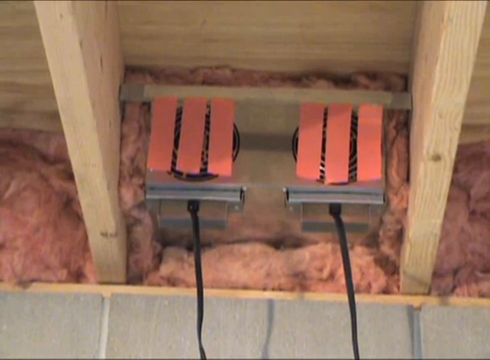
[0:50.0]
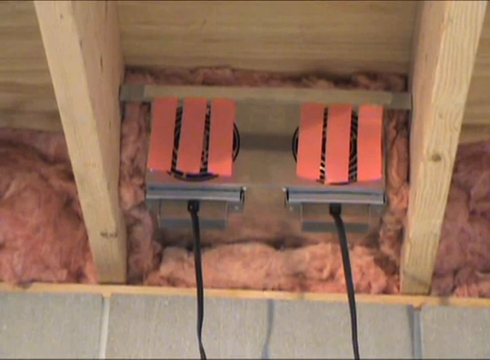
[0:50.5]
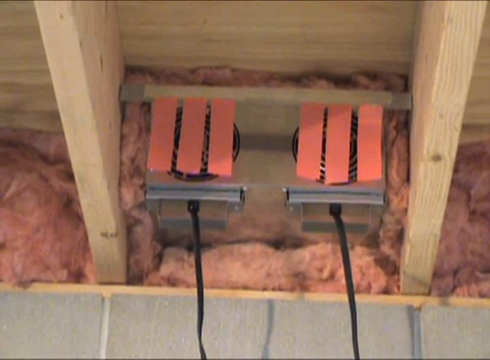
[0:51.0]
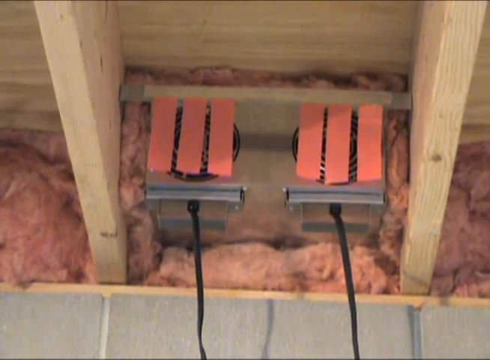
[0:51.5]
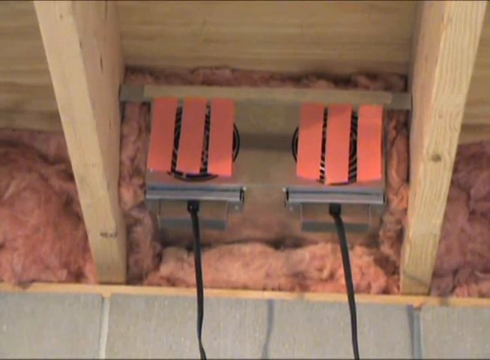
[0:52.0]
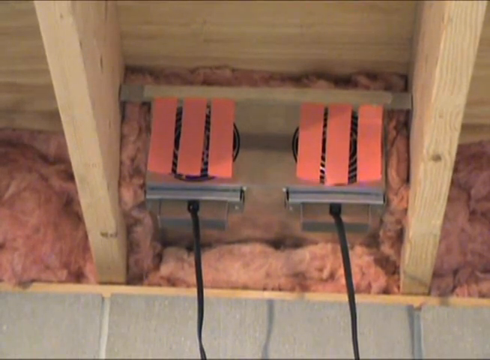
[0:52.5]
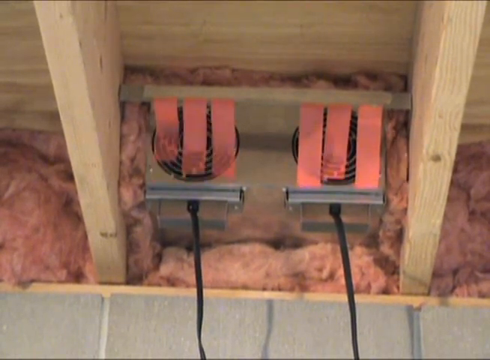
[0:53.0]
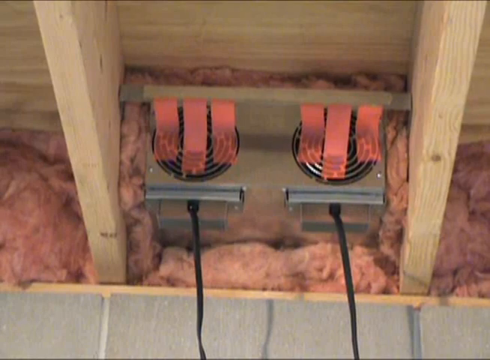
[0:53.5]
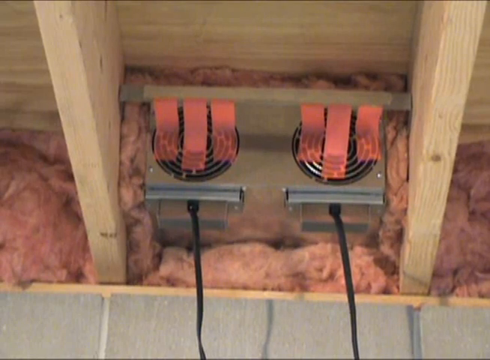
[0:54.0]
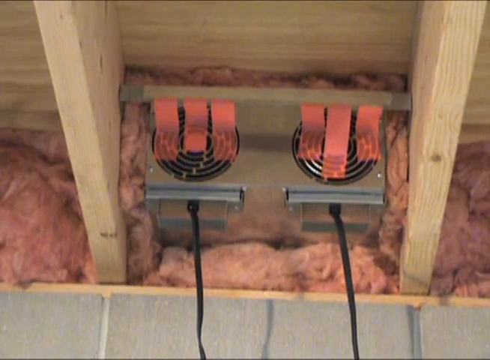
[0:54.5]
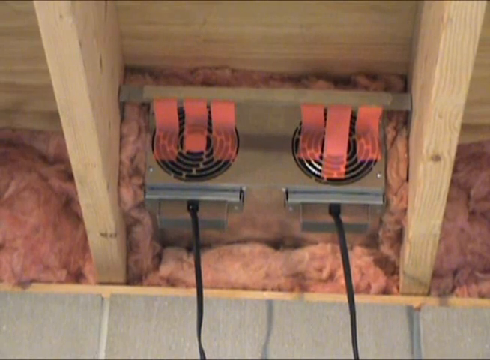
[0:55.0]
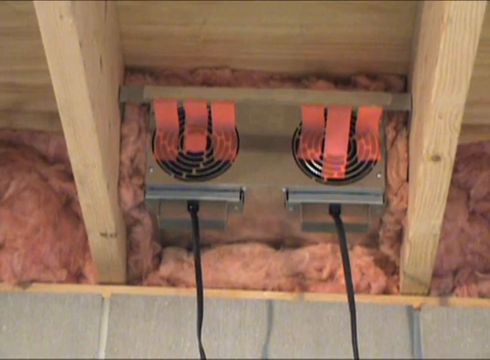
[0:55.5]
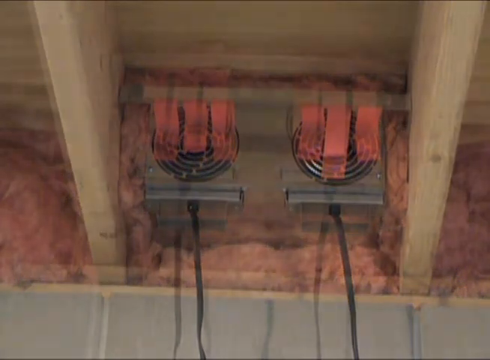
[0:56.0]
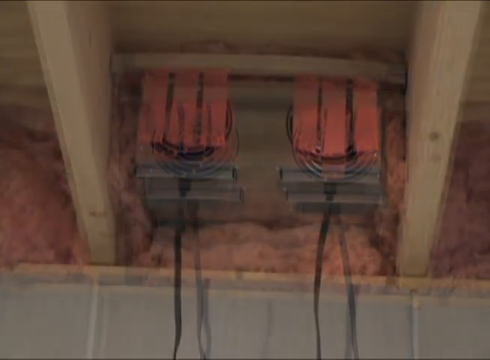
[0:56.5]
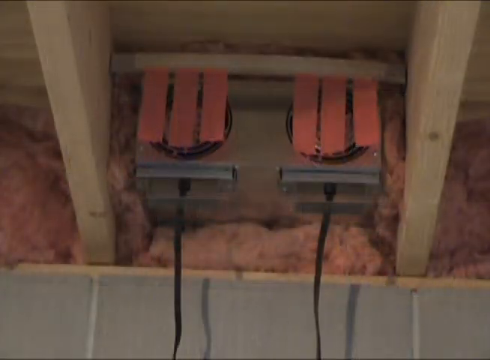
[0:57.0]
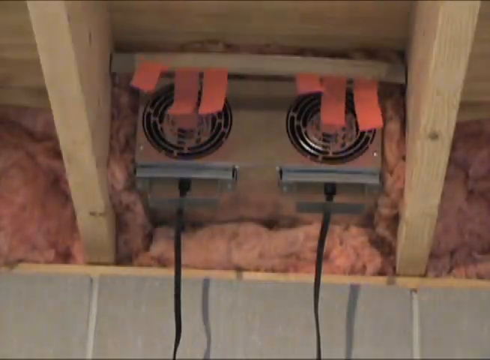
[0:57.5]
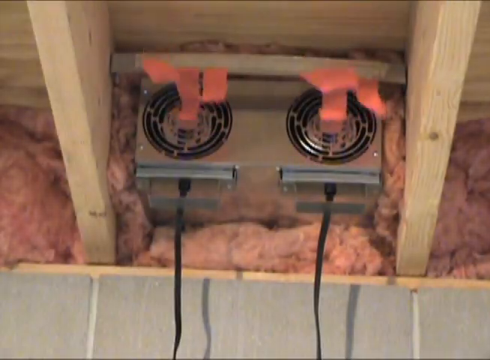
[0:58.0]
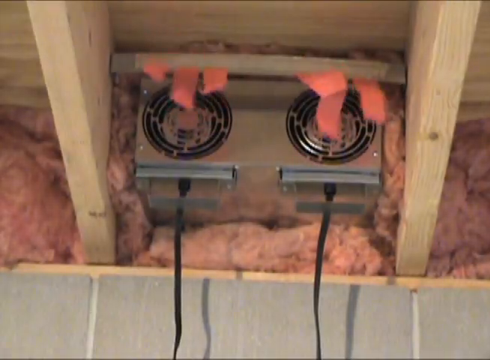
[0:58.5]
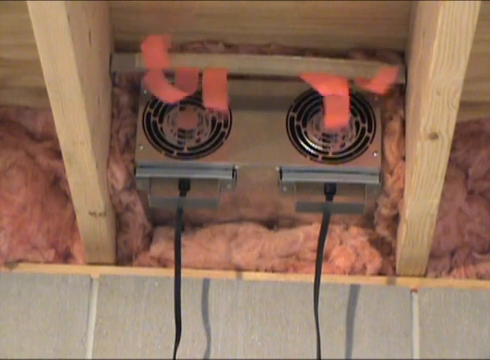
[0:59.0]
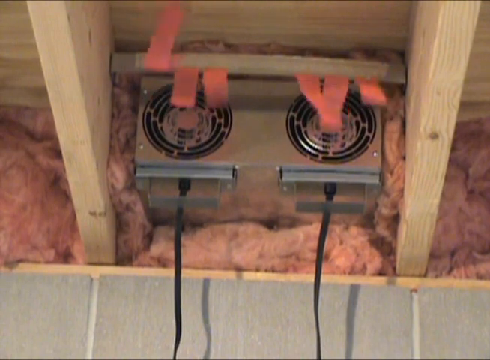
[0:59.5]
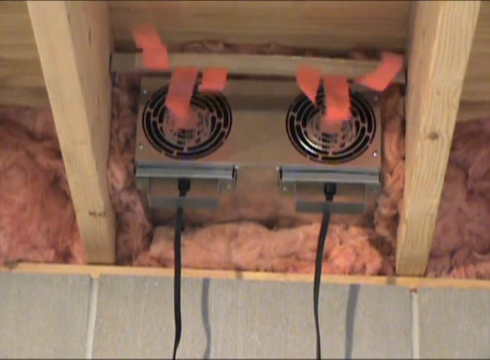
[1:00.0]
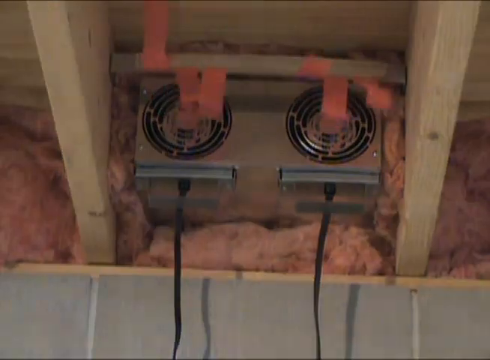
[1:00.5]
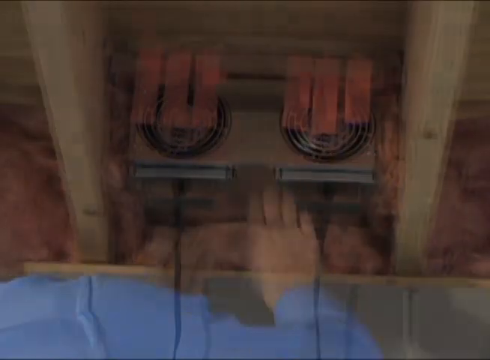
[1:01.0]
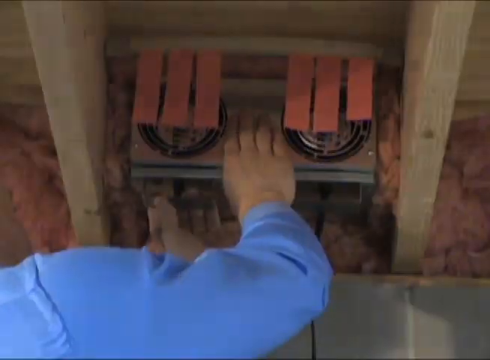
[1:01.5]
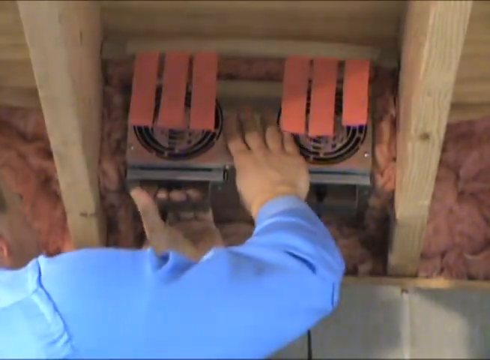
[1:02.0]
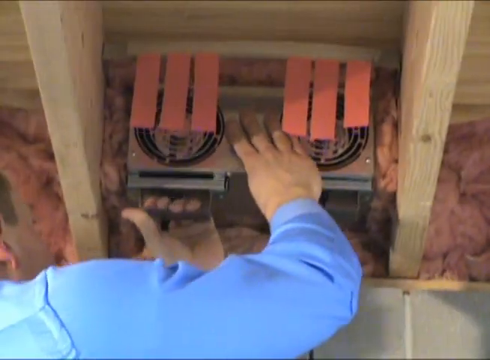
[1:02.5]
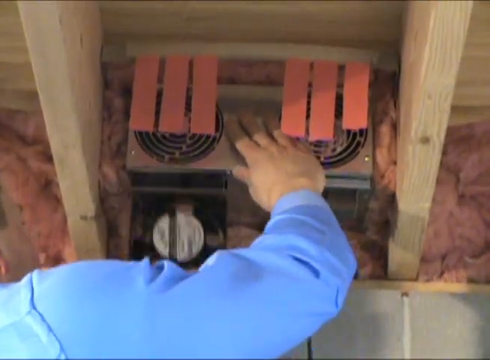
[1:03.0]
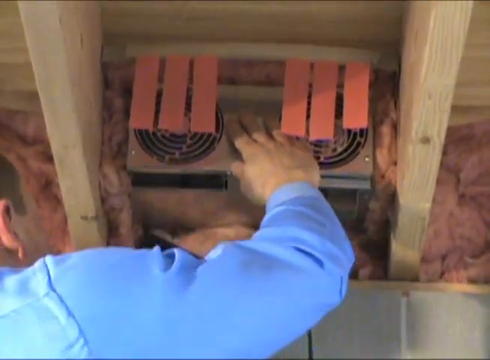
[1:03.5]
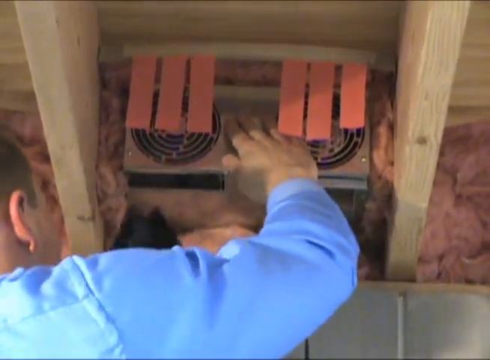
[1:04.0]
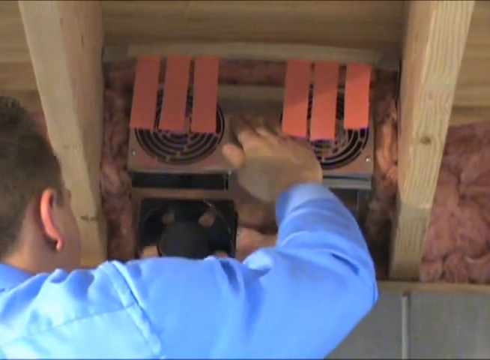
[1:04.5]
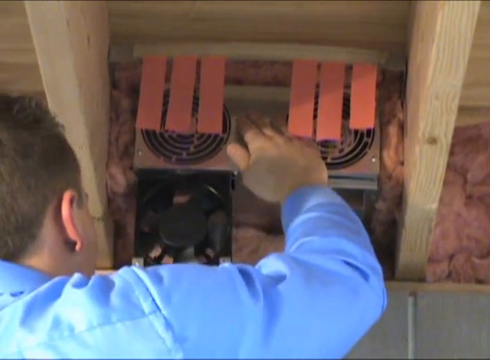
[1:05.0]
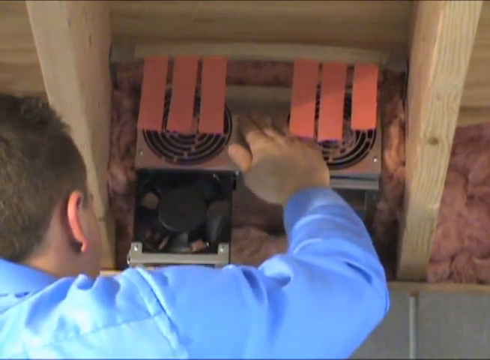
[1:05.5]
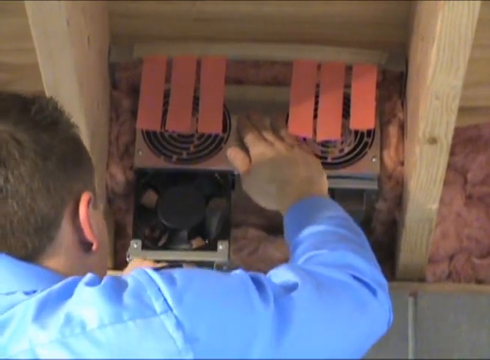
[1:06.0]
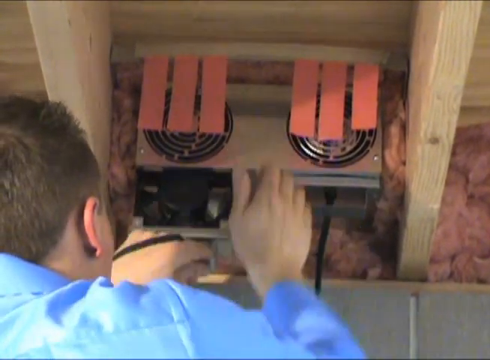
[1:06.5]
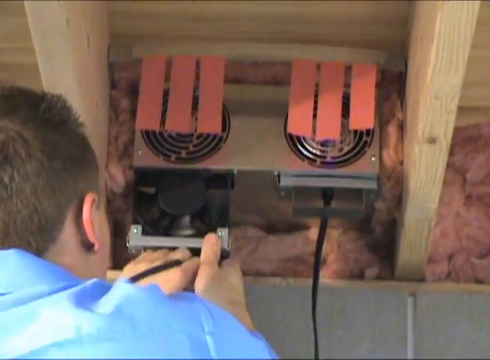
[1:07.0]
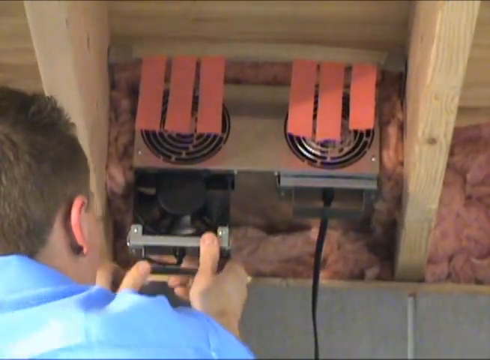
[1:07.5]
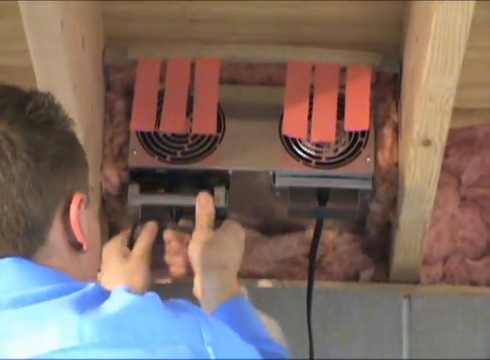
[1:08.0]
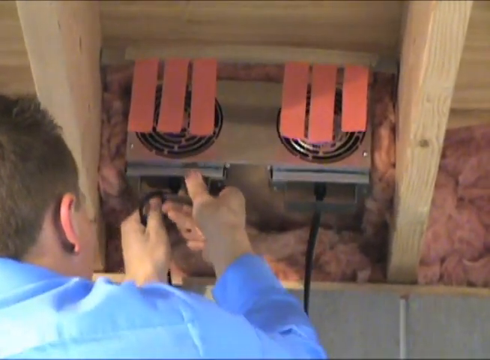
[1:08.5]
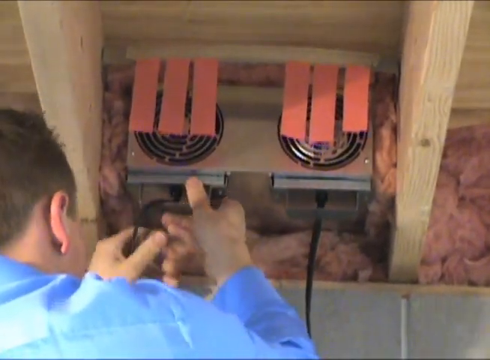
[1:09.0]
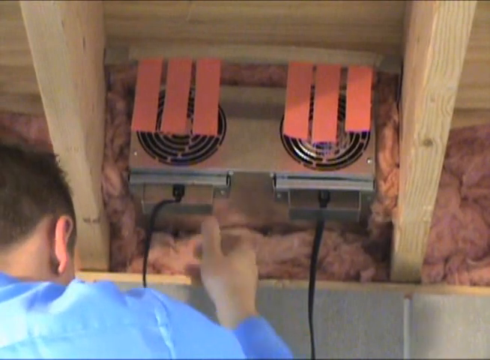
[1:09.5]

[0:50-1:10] Pinewood rafters are at the top of a breeze block wall with pink fiberglass insulation between them. In the middle of the picture, between two rafters, is a metal fan unit with two circular grills for the fans. Six pieces of pink tape have been attached in front of the two grills. The fan unit is turned on, and the air sucks the pink bits of tape so that they lie flat against the unit, showing that the air is moving; then the tape flutters in the breeze from the fan unit. A man's right hand and arm in a blue sweater or shirt appear; he grips the fan unit with his right hand and removes it with a downwards tug, revealing the fan inside, presumably so the fan behind it can be cleaned.